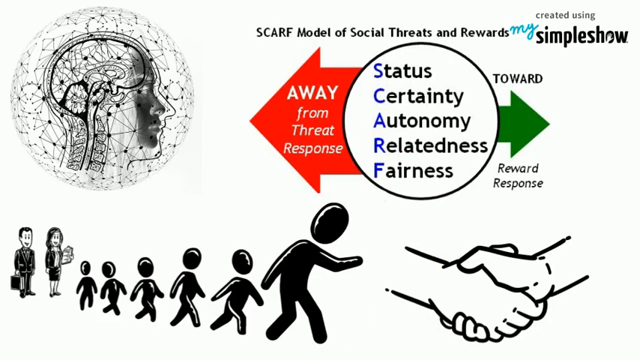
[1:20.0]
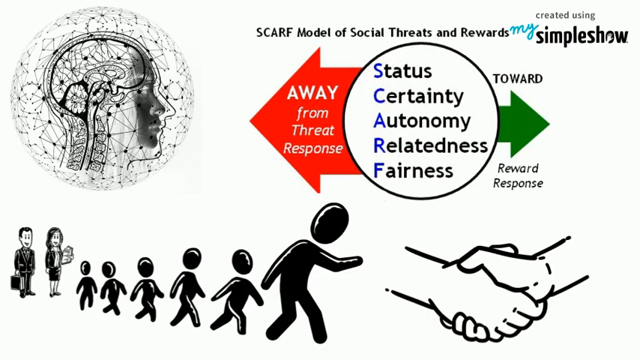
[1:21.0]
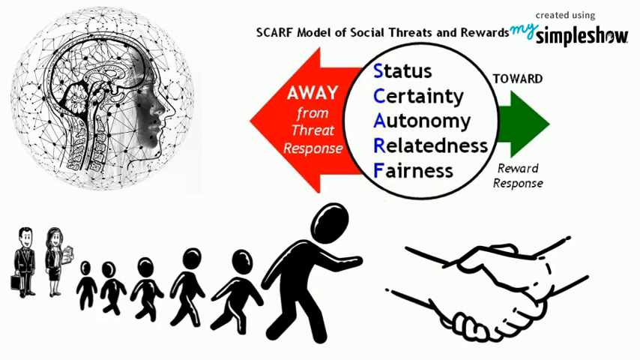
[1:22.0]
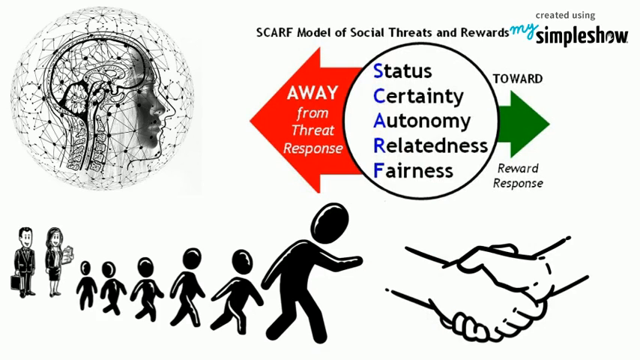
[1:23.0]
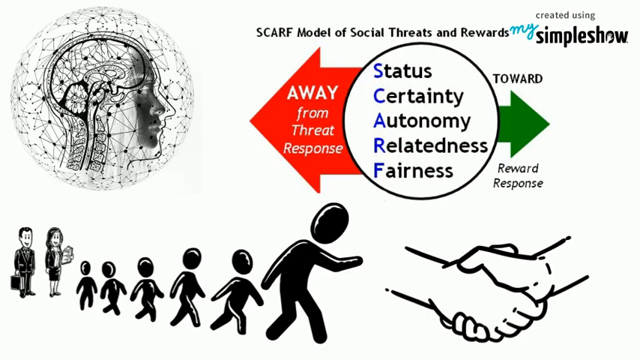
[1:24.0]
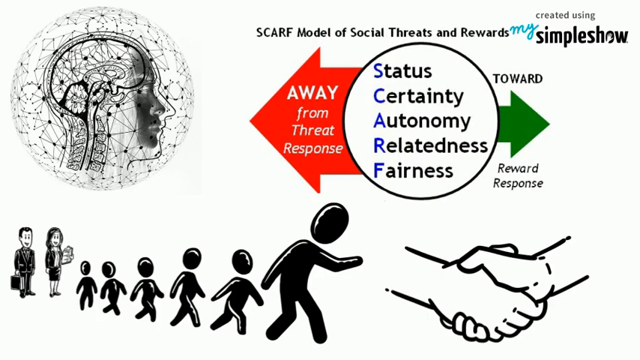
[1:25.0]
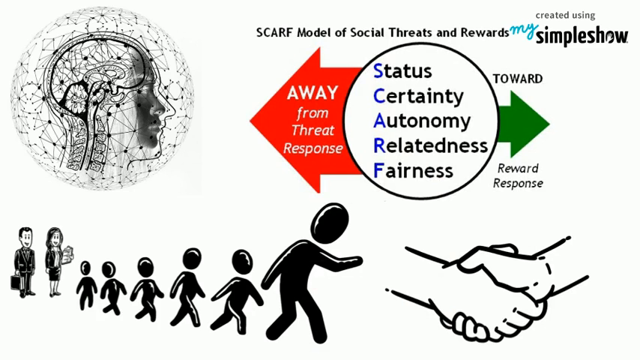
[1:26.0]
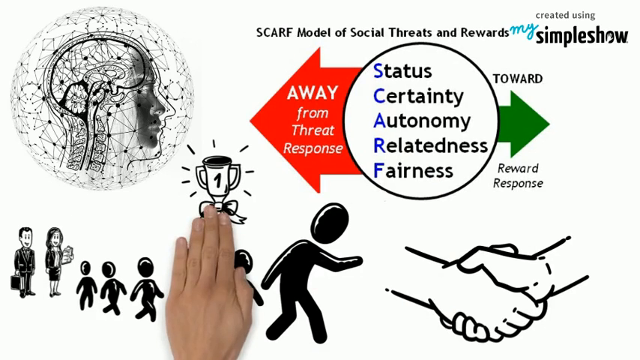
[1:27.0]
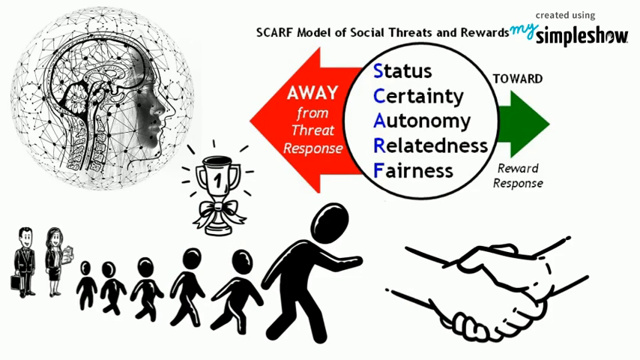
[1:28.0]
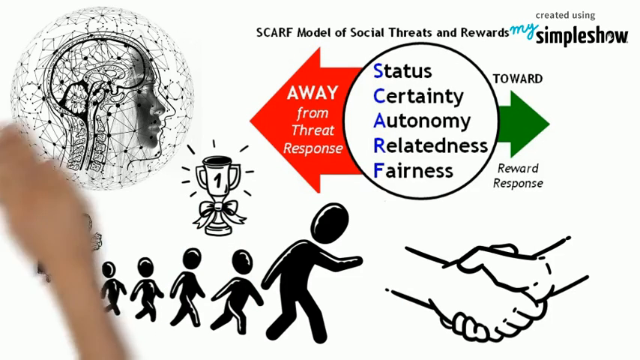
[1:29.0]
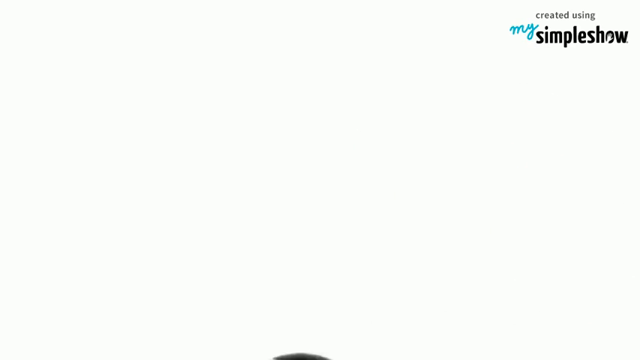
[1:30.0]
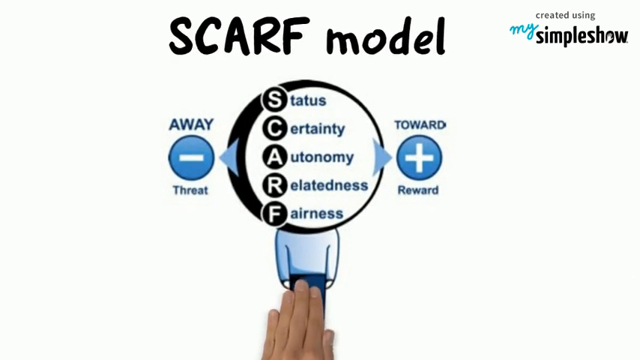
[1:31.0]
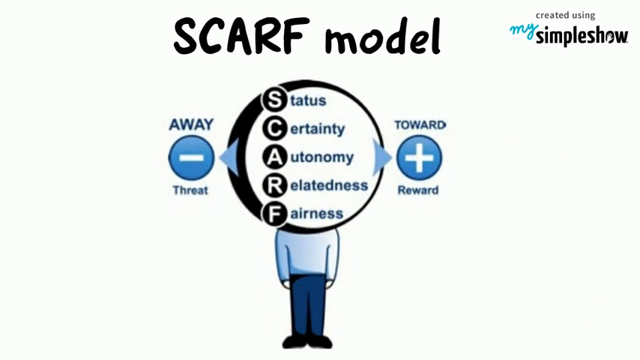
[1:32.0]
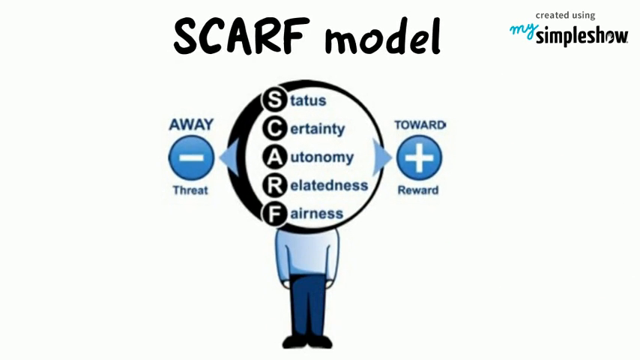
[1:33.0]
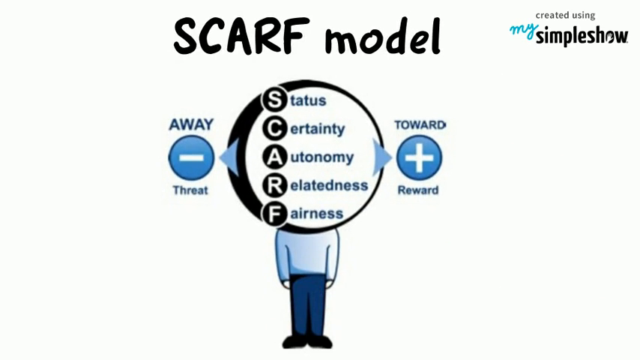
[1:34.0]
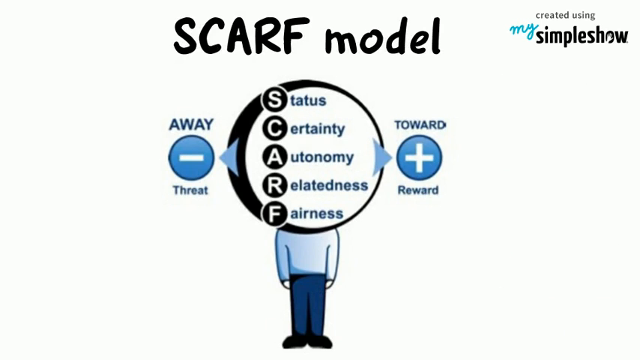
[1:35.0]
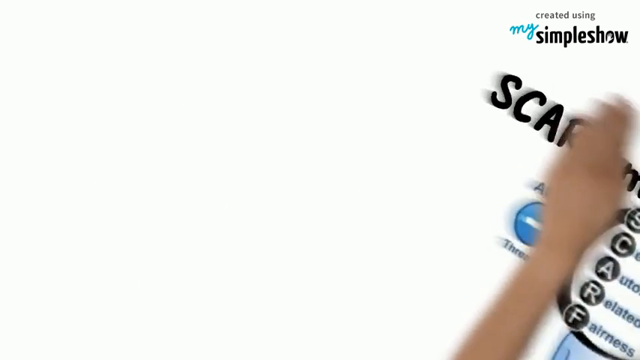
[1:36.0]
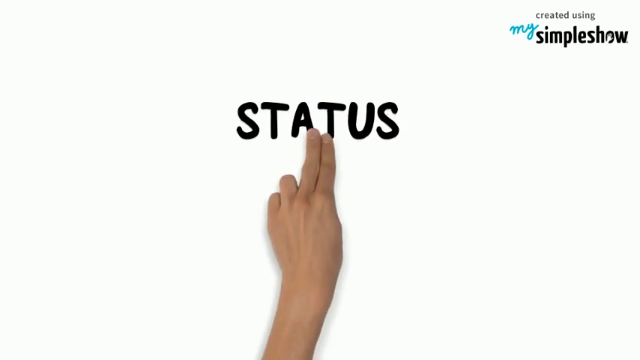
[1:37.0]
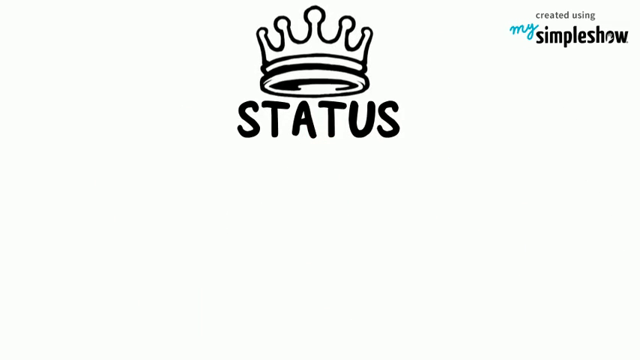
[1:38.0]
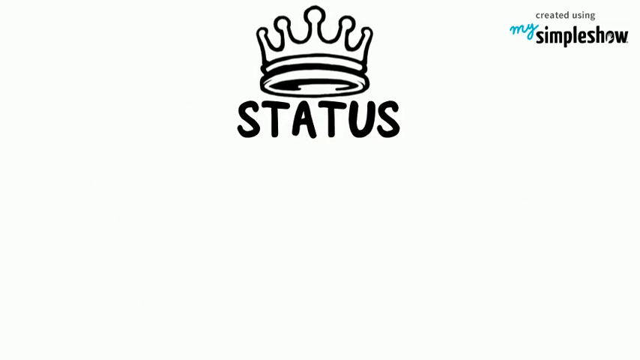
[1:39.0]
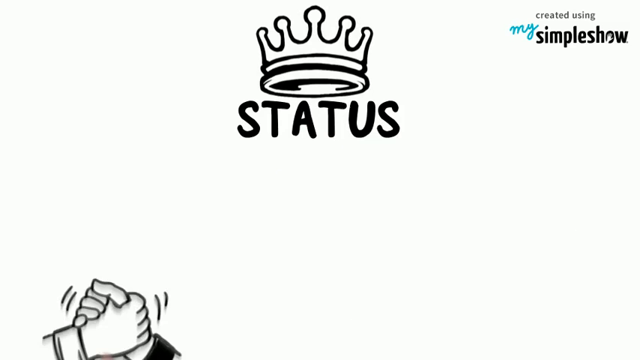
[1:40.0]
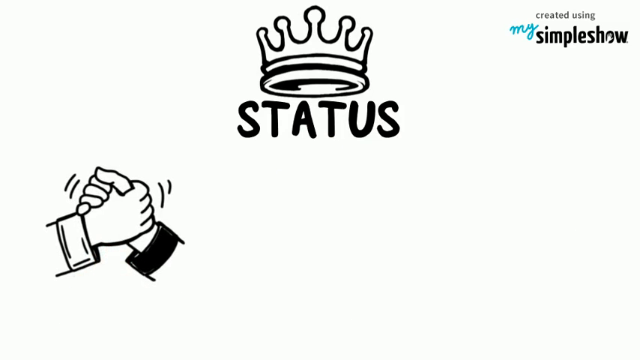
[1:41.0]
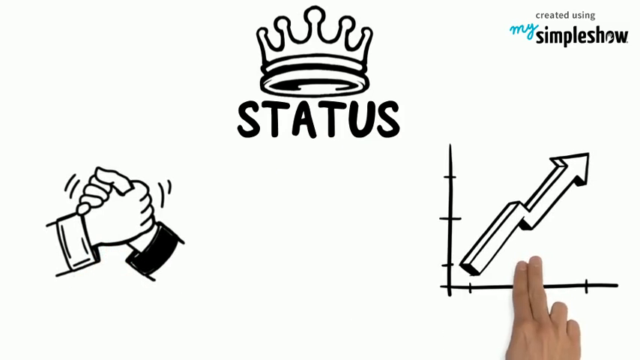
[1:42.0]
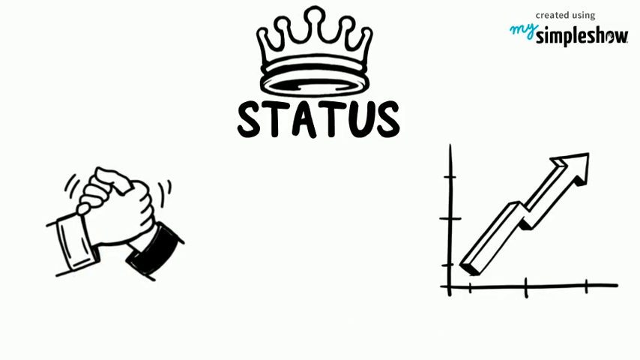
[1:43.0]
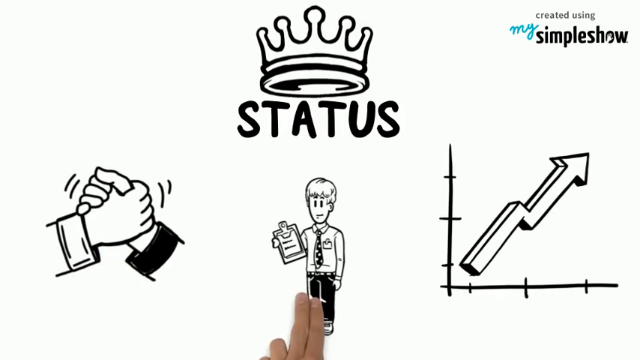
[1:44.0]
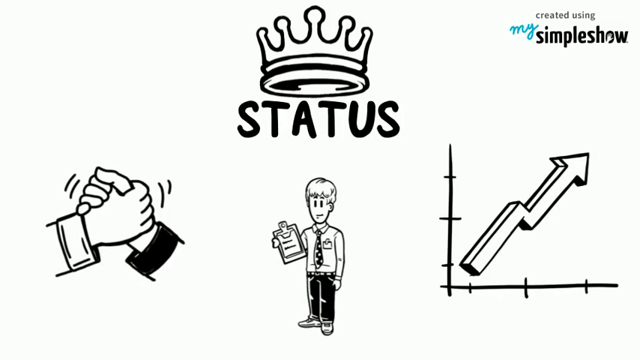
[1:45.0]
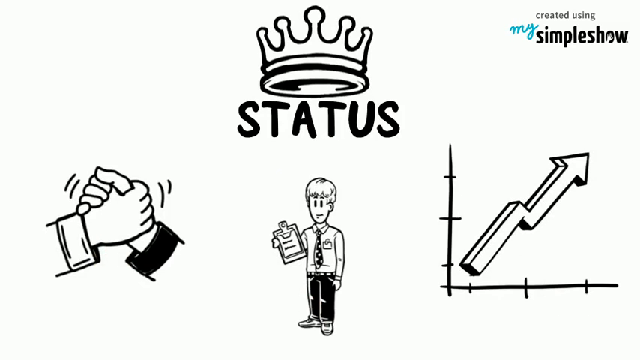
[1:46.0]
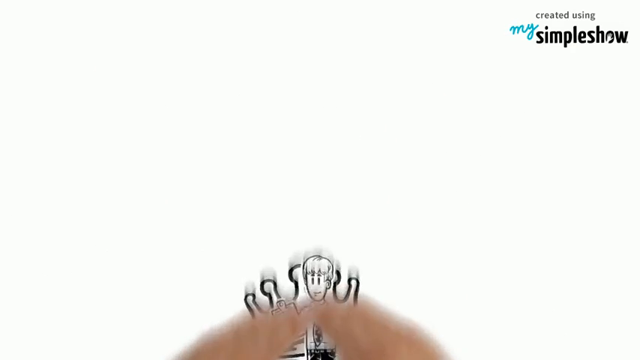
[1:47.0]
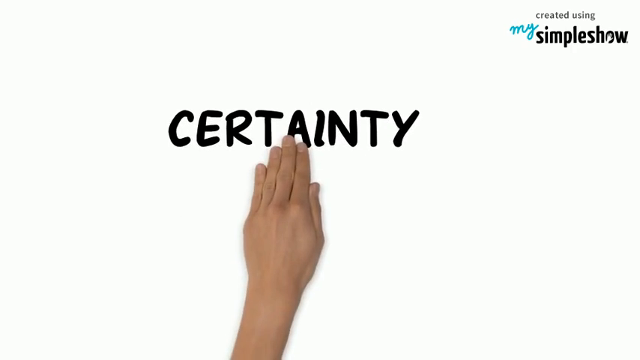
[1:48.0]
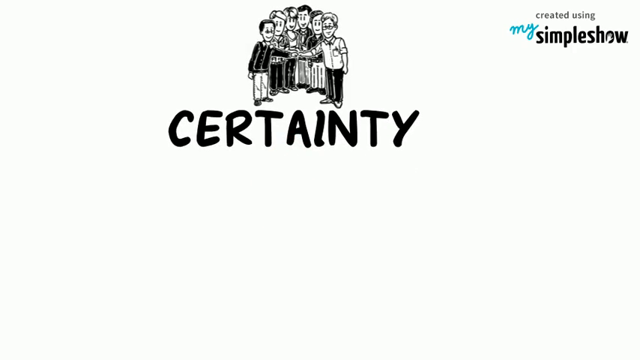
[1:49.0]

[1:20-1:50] A woman's head with a brain is caught up in a web. A man and a woman appear; the man holds a bag and the woman seems to be holding some books. Next, a line of people walks toward a particular direction. Then words appear in a circle with arrows pointing left and right: status, certainty, autonomy, relatedness, fairness. The left-hand arrow shows "away from threat response." A picture shows two hands shaking each other. A hand then points to something that looks like an award, with an inscription that seems to be "one." Then an image shows status, certainty, autonomy, relatedness and fairness, with an arrow that also shows "away."